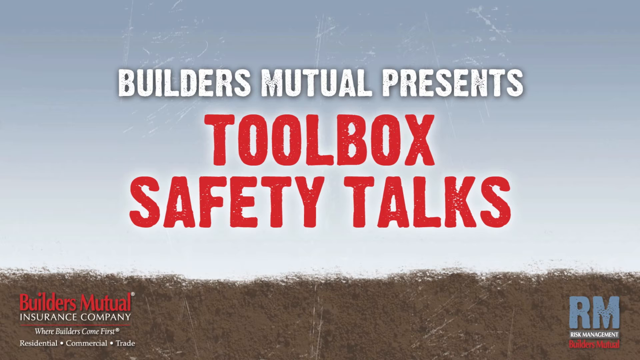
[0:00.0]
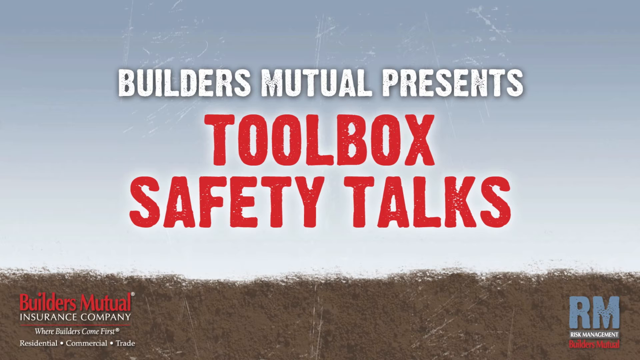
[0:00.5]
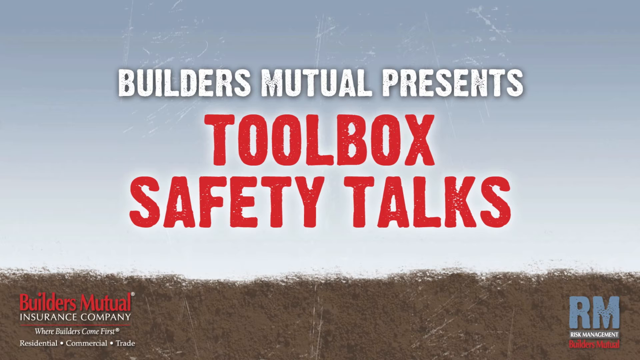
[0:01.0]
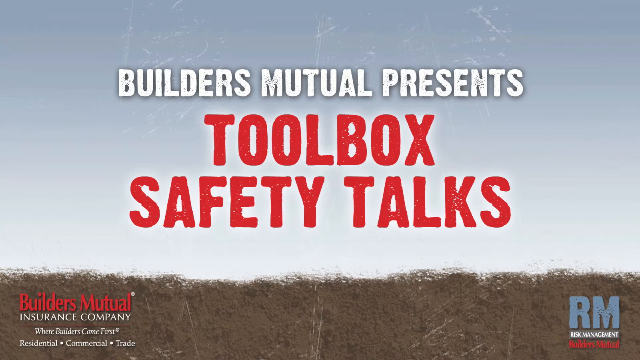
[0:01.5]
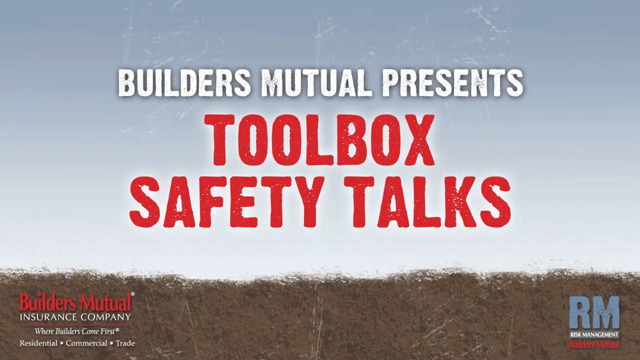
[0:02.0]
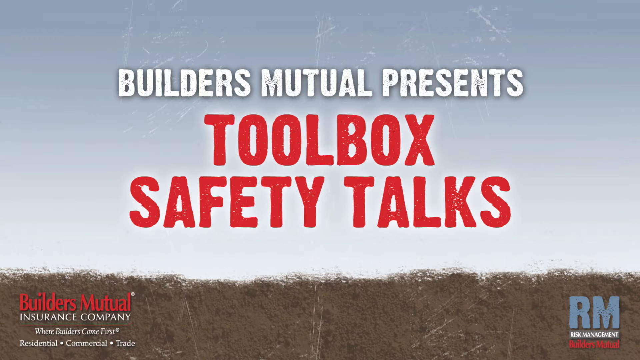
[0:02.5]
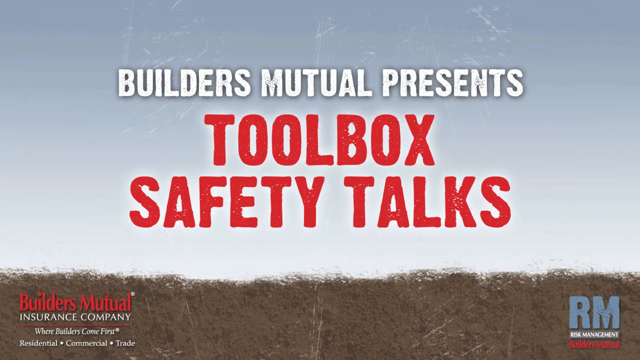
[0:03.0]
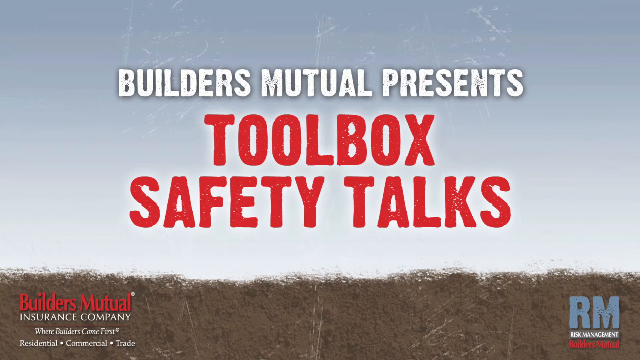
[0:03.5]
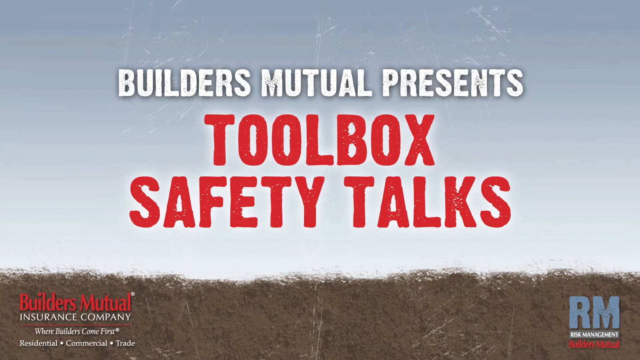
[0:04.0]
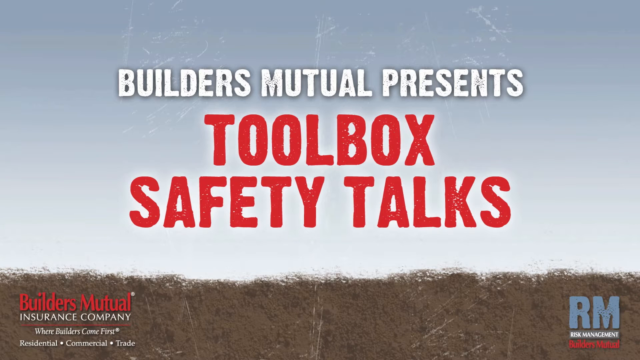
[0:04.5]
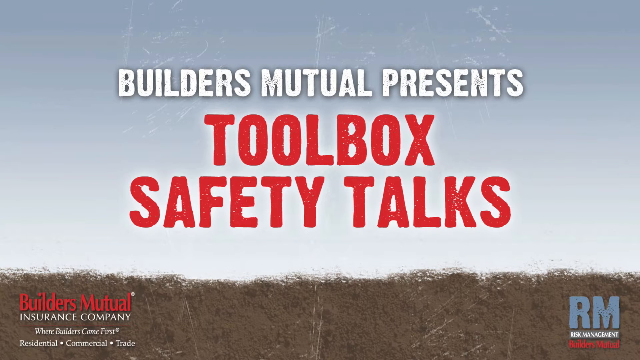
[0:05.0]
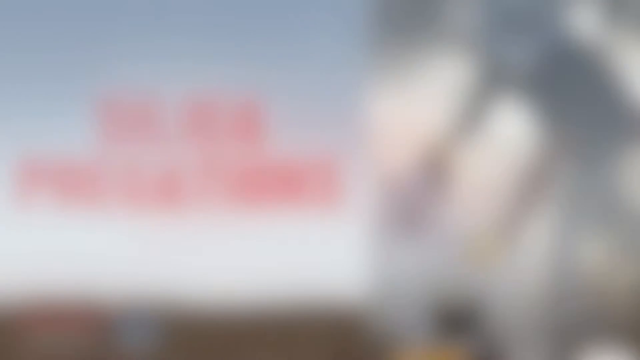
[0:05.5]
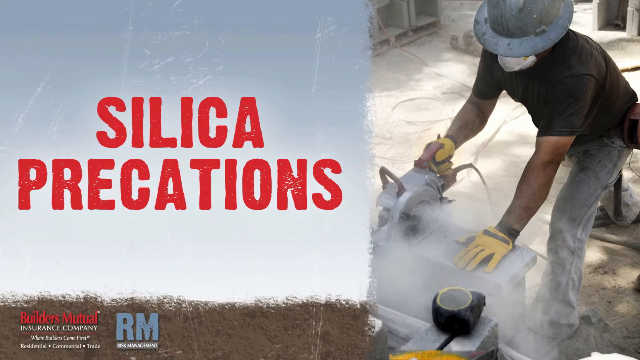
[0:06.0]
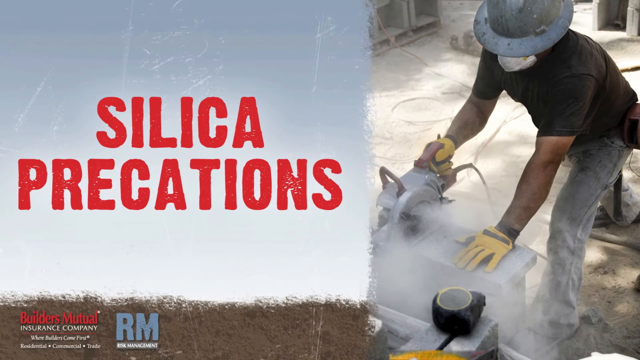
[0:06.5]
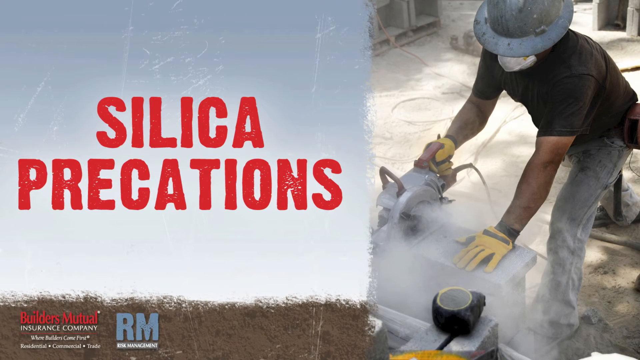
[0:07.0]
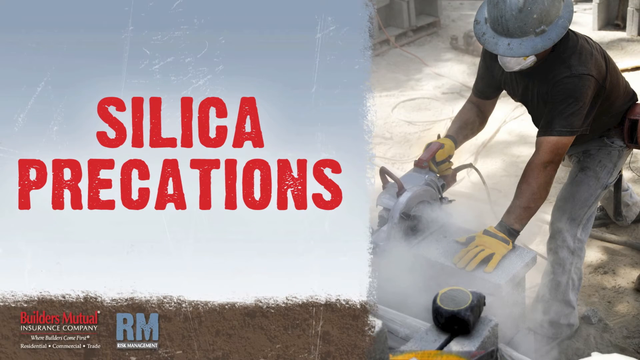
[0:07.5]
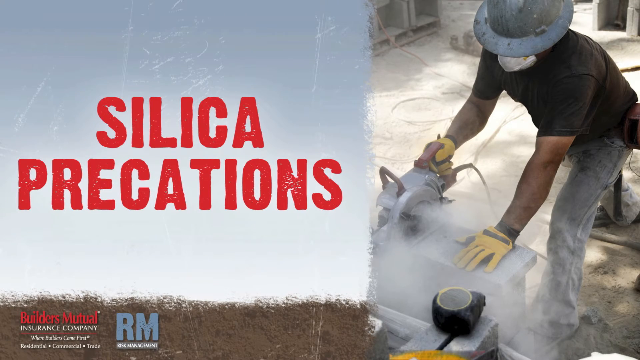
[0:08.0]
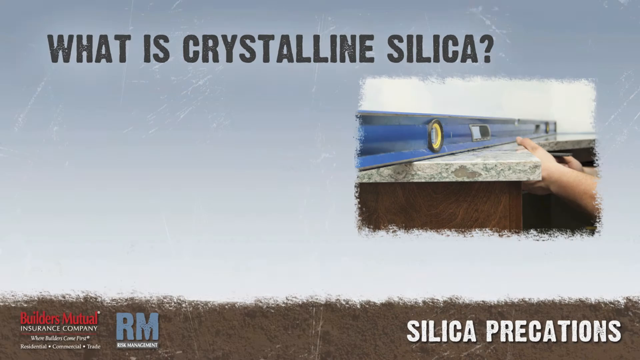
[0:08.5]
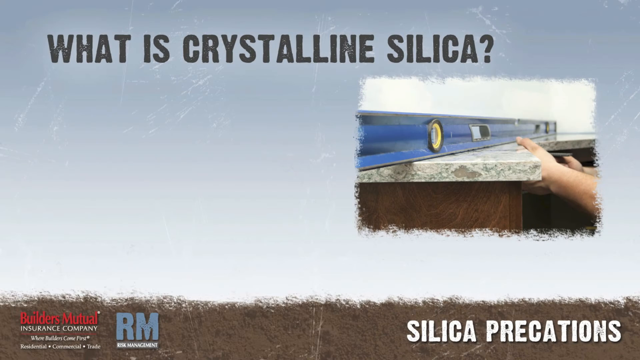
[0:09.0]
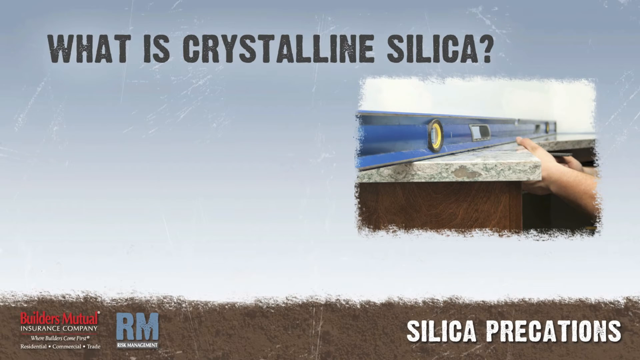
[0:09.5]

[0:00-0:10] A title in the center reads "Builders Mutual presents toolbox safety talks", with "toolbox safety talks" in red and "Builders Mutual presents" in white. In the bottom left corner is a business company logo that says "Builders Mutual Insurance Company", and the background image looks like blue sky. The scene changes to a man on the right side using an electric saw that creates a lot of dust; he wears a face mask and a hard hat. On the left side, two large words appear: "silica precautions".